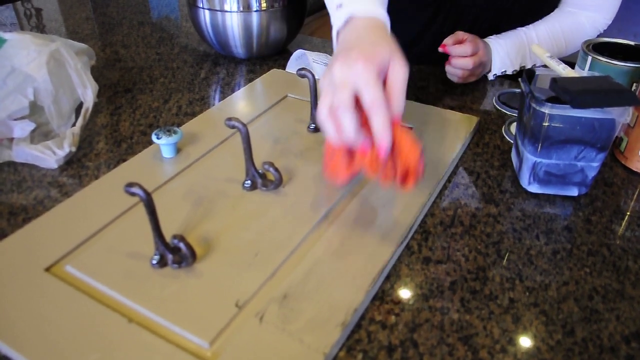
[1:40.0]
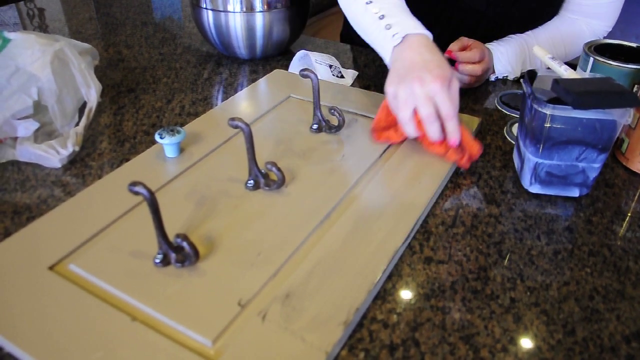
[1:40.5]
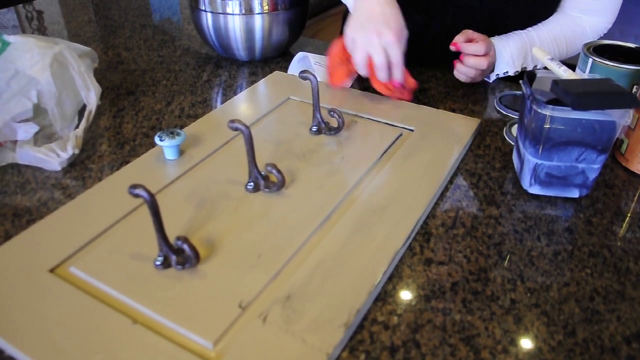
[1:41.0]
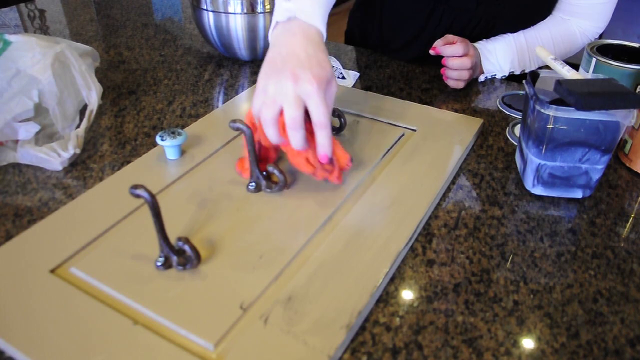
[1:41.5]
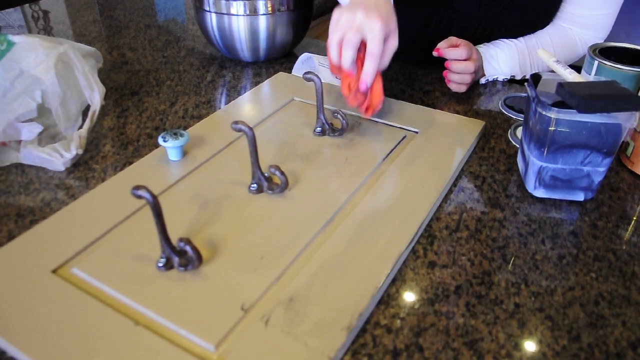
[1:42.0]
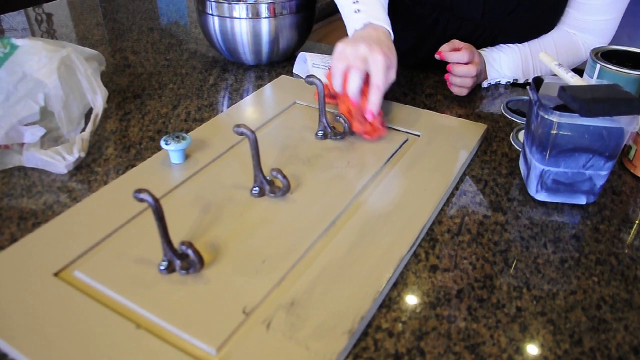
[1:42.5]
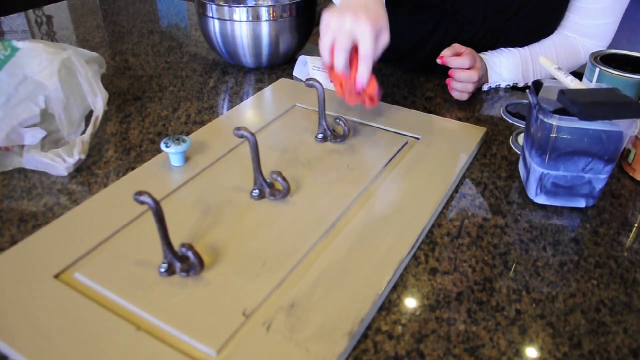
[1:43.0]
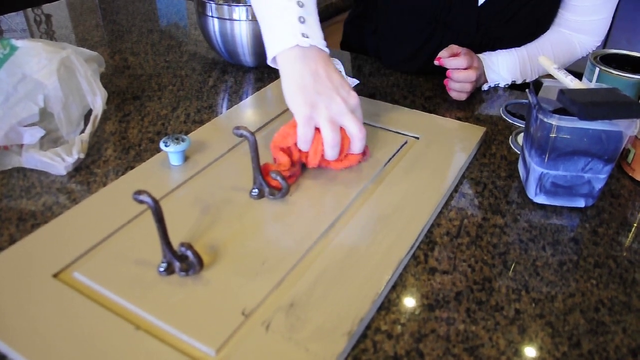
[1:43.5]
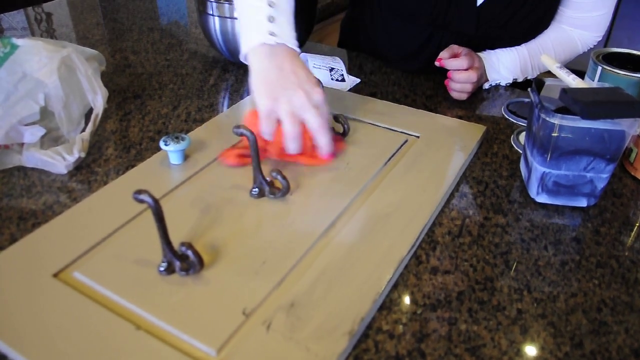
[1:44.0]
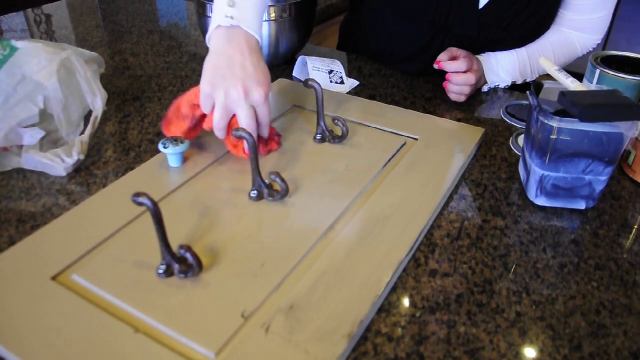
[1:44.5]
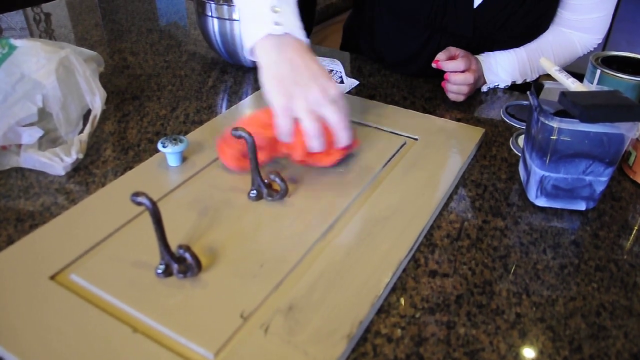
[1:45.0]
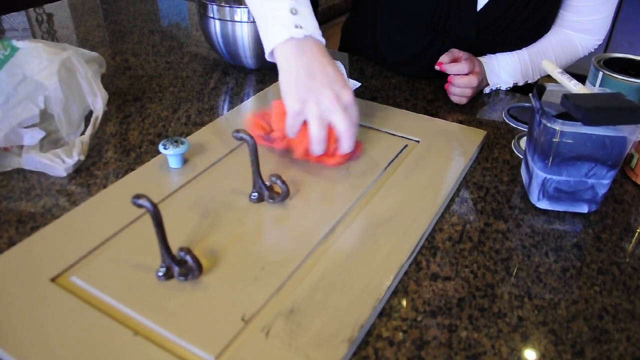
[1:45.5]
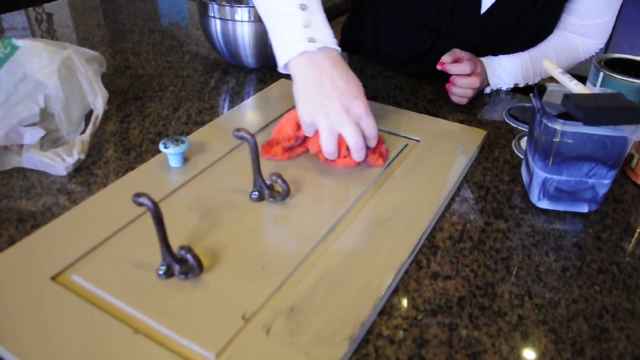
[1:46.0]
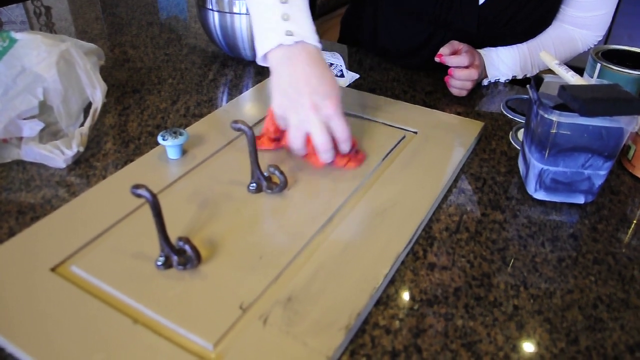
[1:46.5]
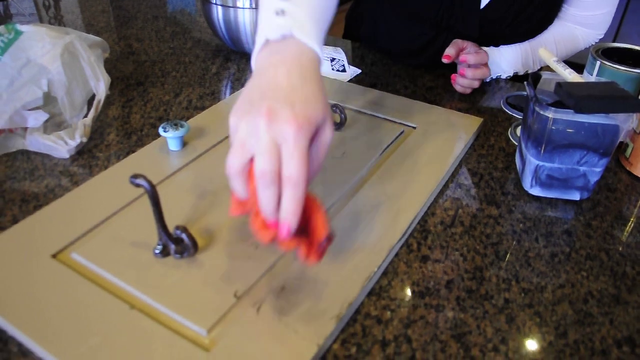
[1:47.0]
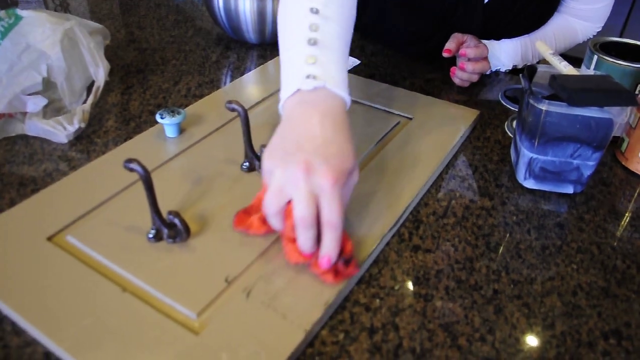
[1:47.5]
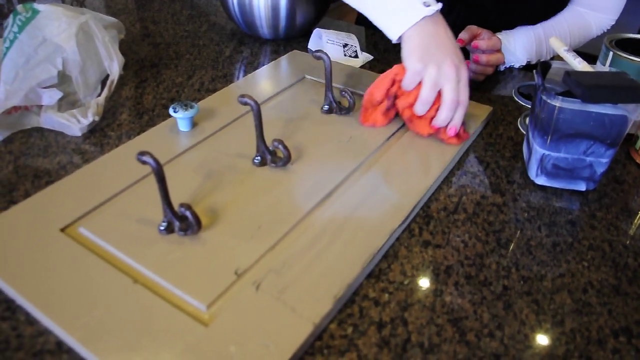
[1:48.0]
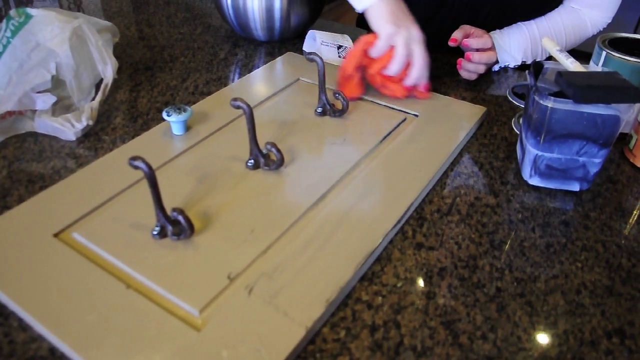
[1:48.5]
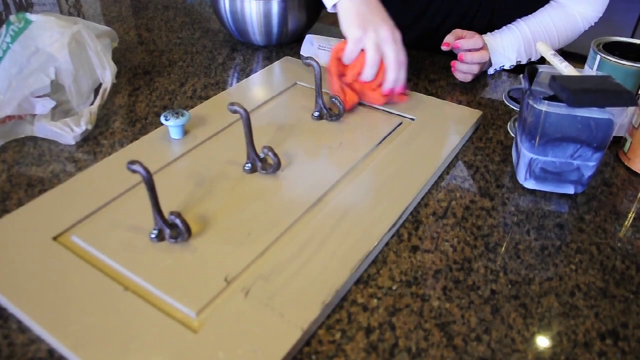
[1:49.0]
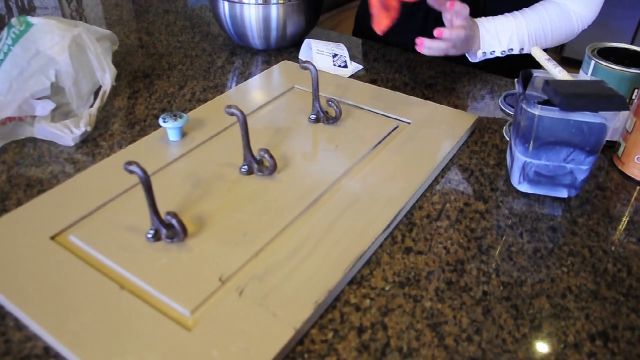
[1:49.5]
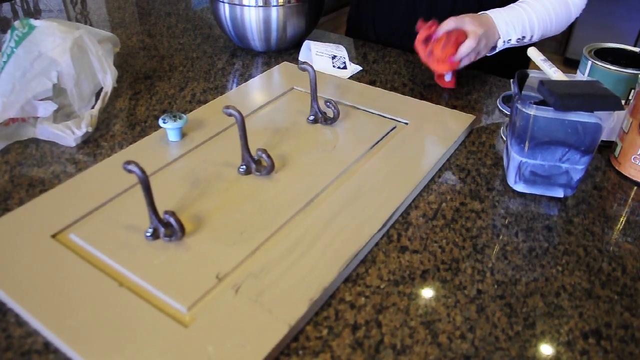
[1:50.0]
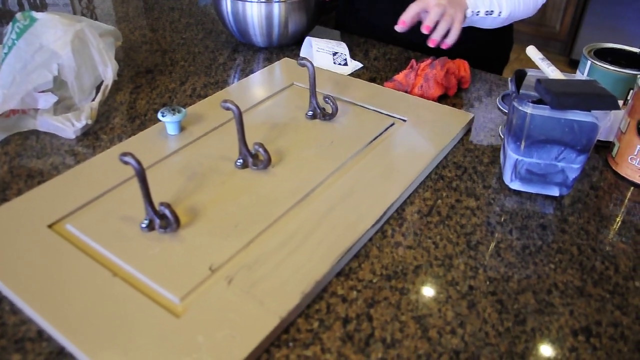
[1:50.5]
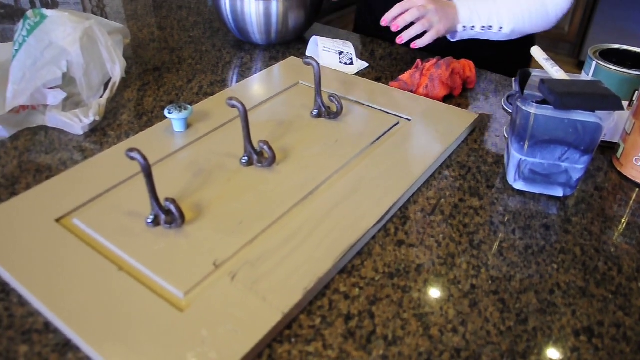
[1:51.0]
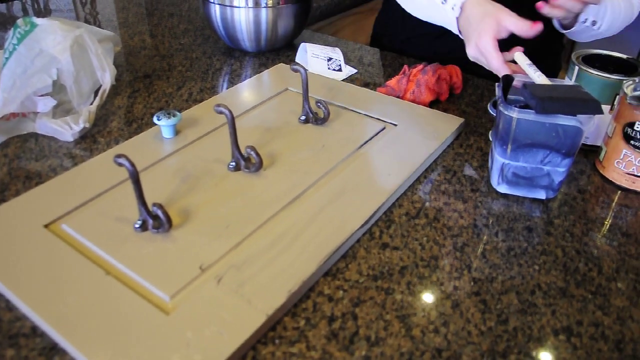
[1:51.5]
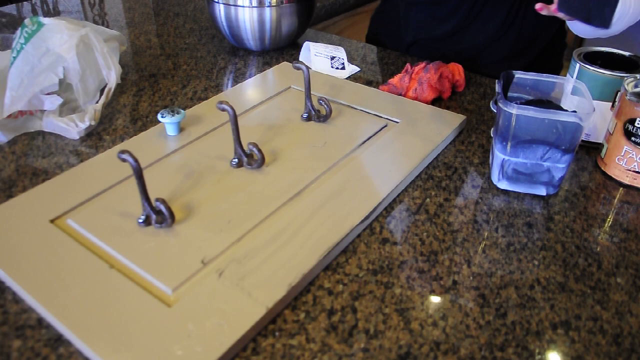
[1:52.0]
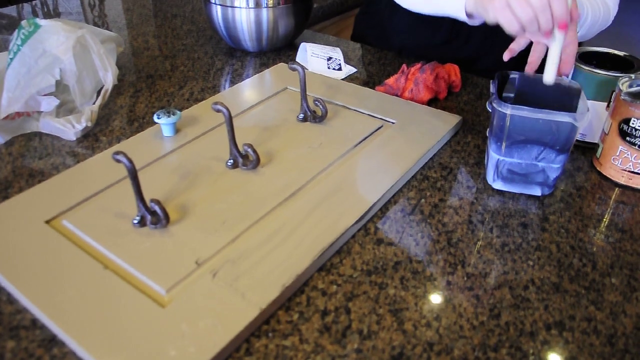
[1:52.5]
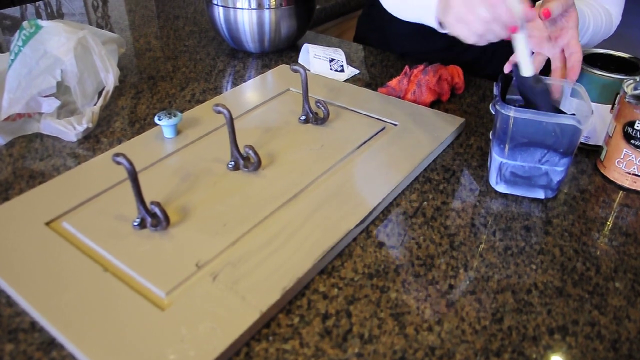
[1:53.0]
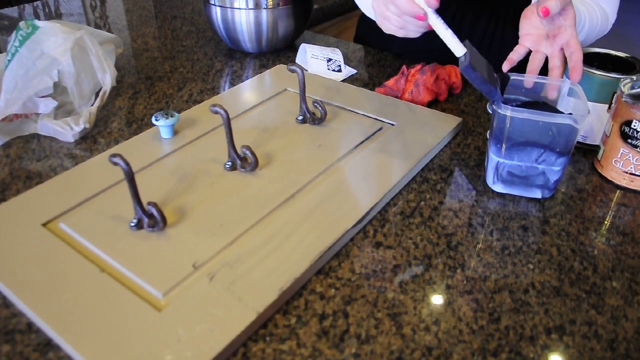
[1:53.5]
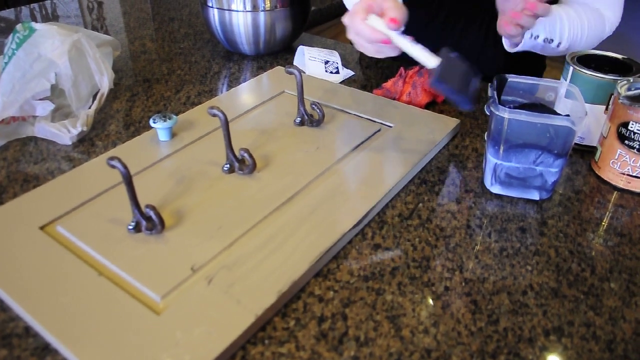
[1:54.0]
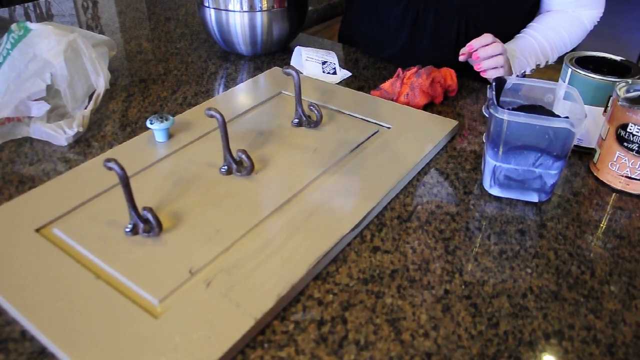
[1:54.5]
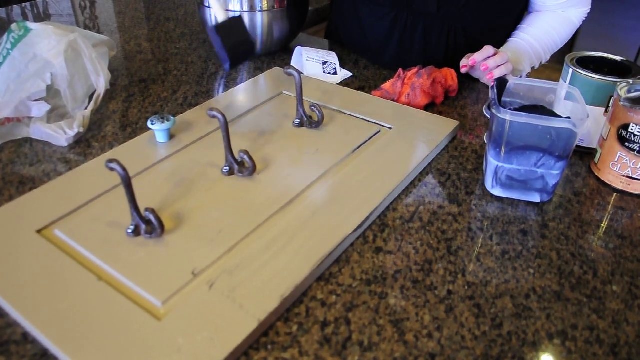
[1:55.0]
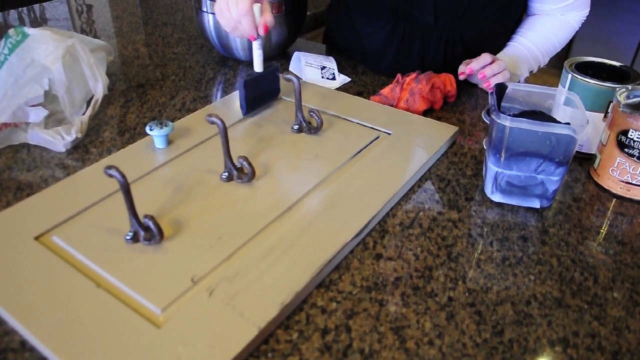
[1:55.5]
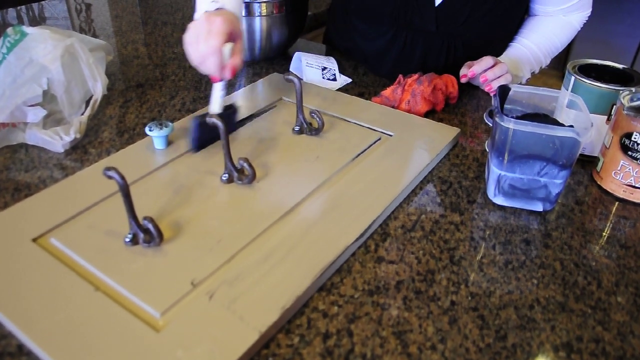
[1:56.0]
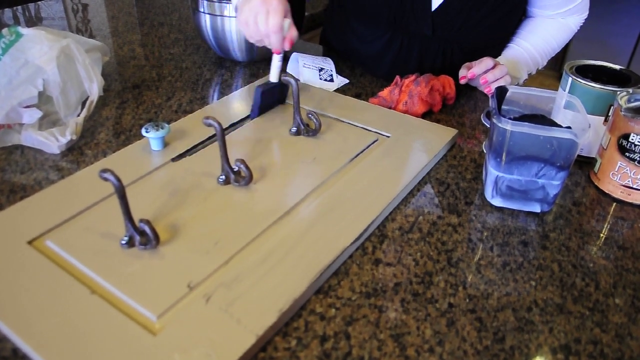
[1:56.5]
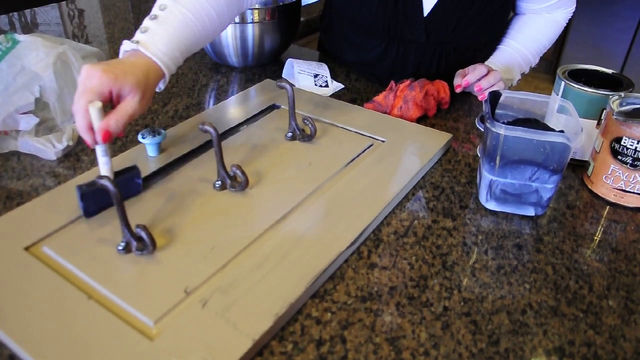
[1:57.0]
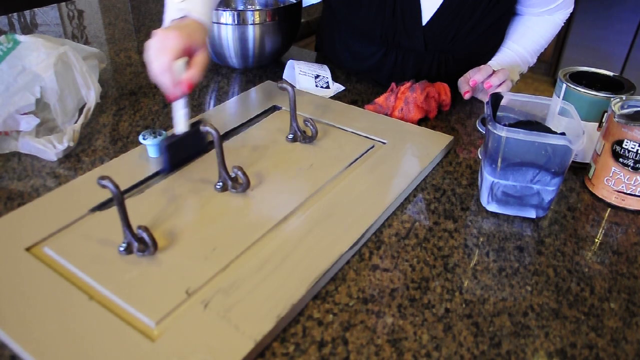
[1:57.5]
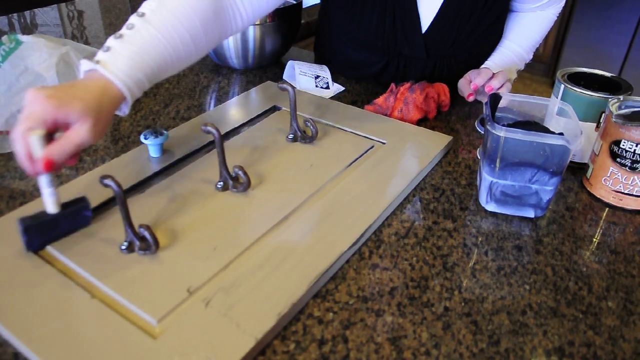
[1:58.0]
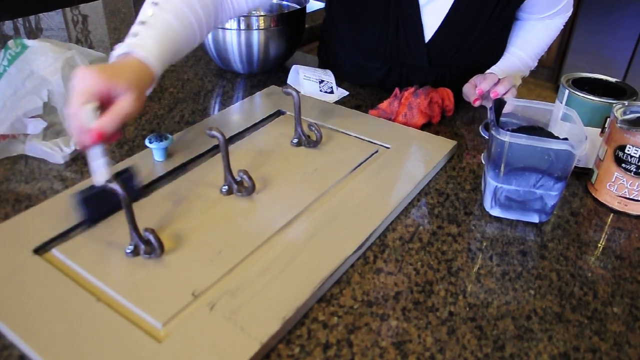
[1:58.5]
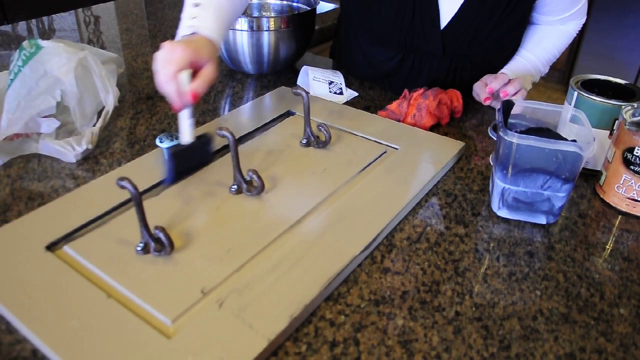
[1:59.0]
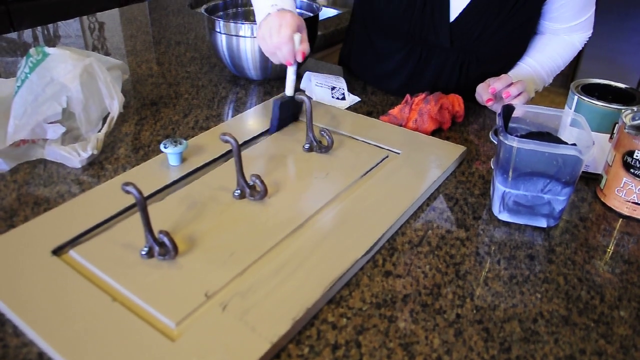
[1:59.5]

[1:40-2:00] In the YouTube video called How to Glaze Furniture, a rectangular piece of wood with three hooks in the center and a ceramic knob at the top is on a brown and black marble countertop. Only the woman's hands are visible, not her face. She has used a red cloth to wipe off the glaze or paint applied to the upper right corner and partway down the right side from the viewer's perspective. She then dips the paintbrush in the plastic bin holding the glaze and runs it down the groove on the left side of the wood from the viewer's perspective, to her right. The silver bowl, with reflections on it, is in the background, along with two containers of paint or glaze of the Behr brand.